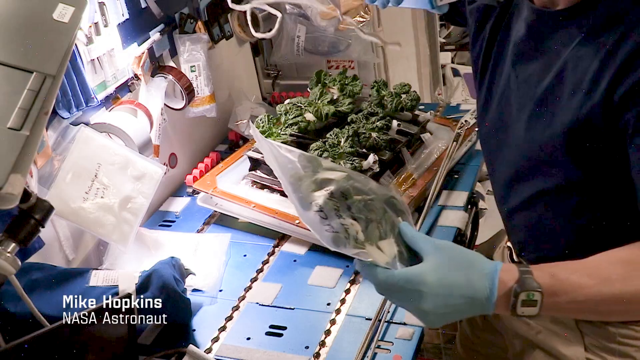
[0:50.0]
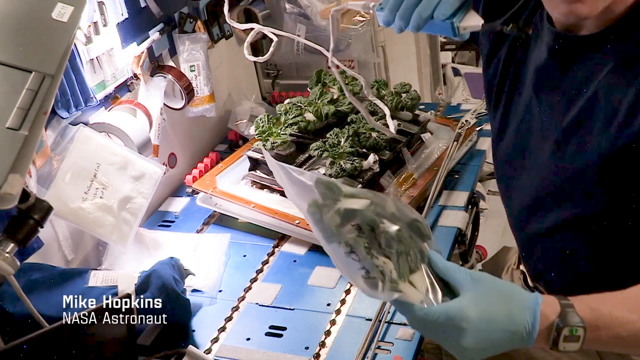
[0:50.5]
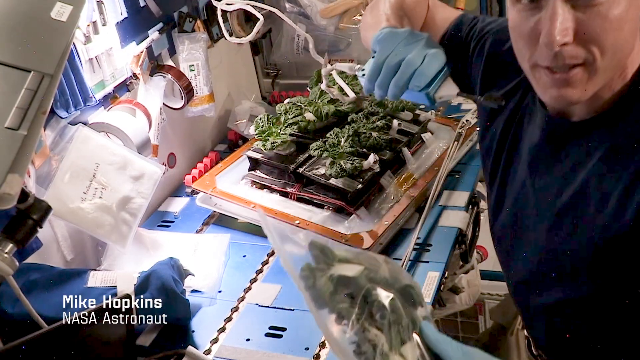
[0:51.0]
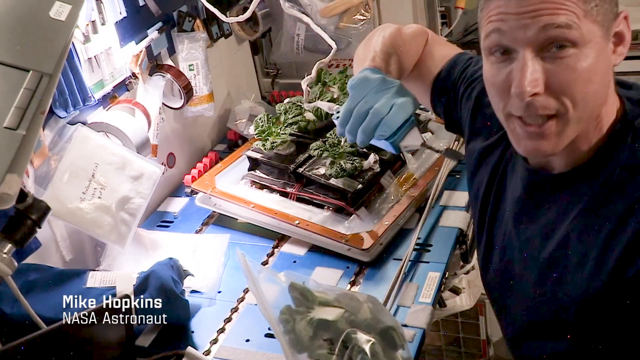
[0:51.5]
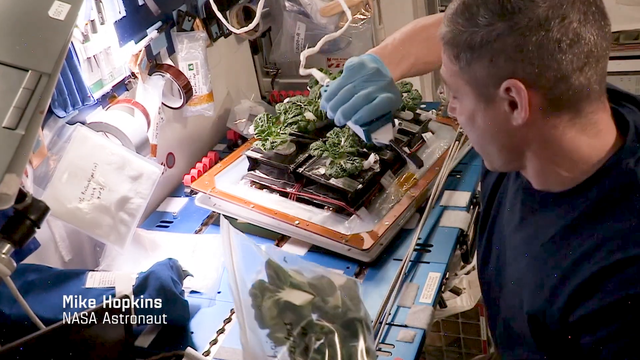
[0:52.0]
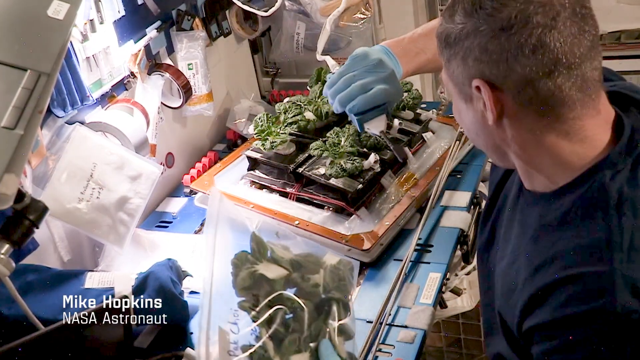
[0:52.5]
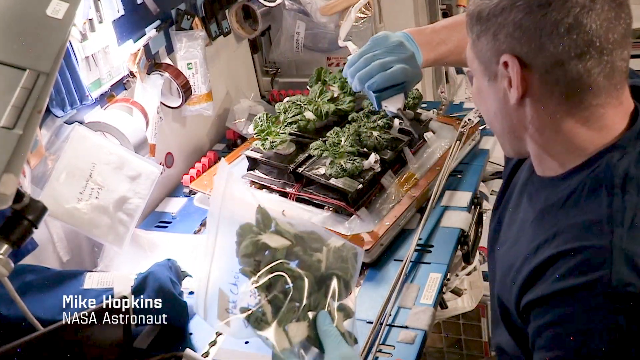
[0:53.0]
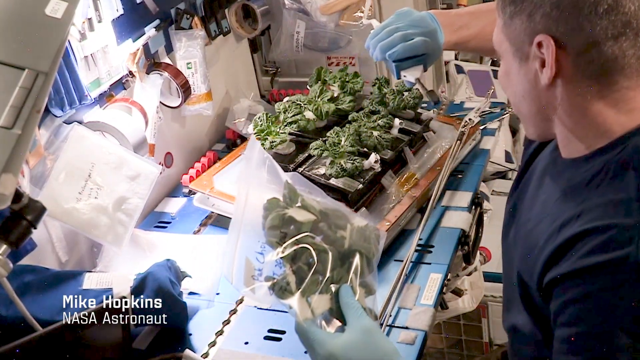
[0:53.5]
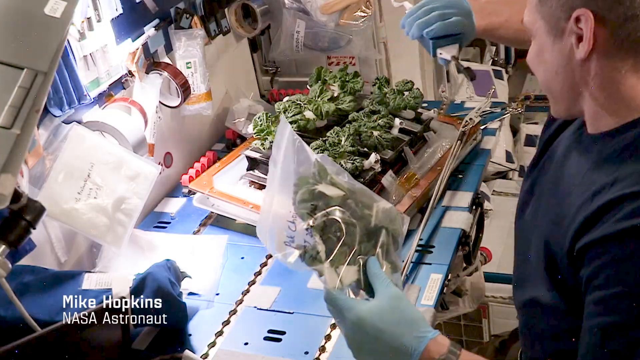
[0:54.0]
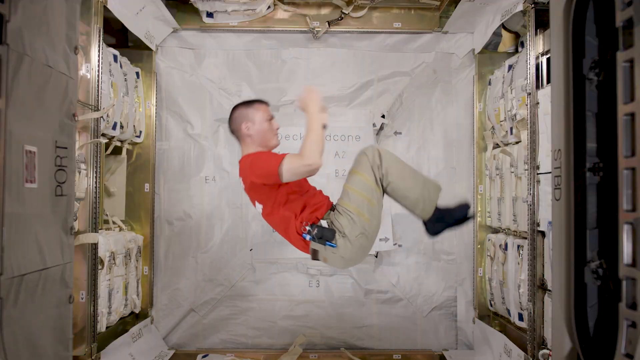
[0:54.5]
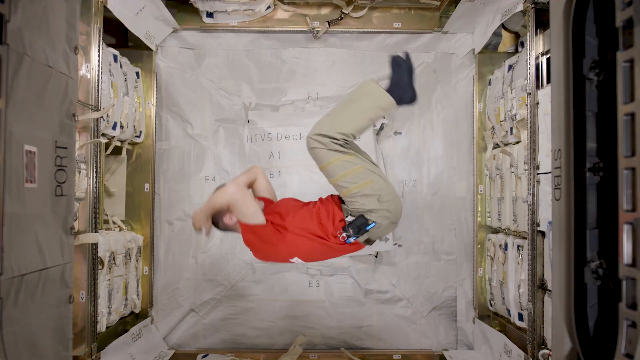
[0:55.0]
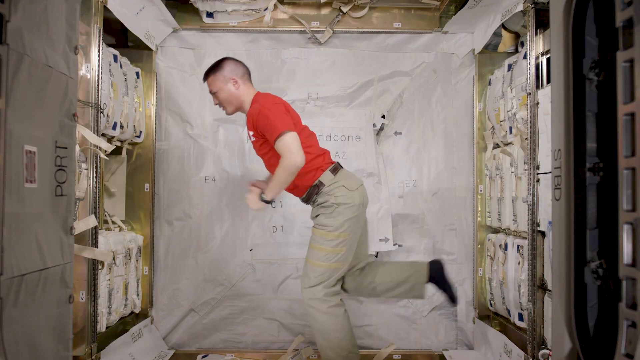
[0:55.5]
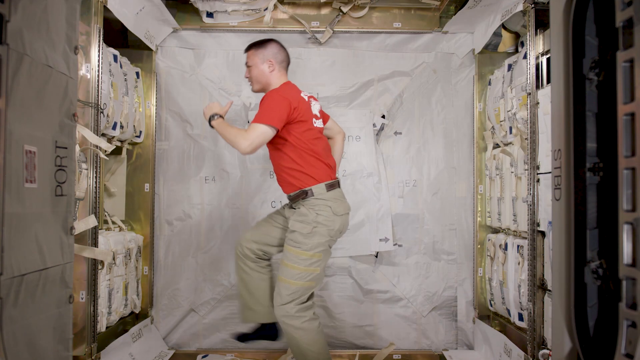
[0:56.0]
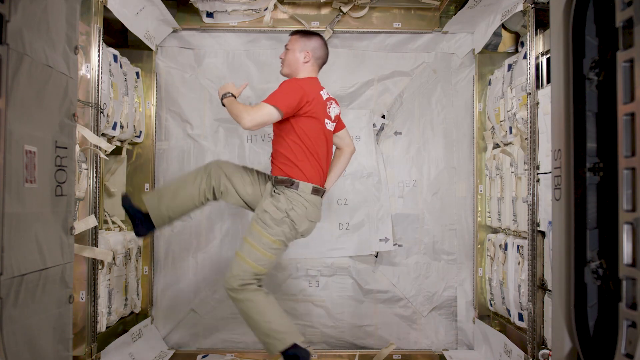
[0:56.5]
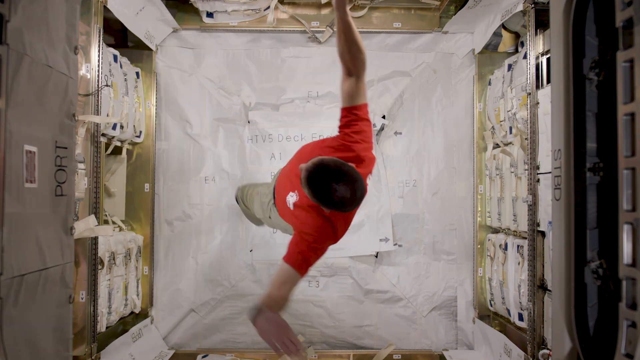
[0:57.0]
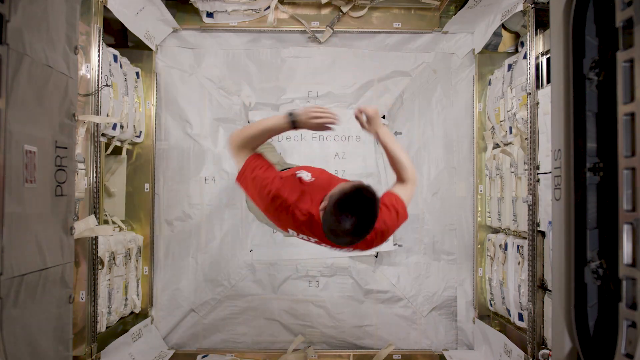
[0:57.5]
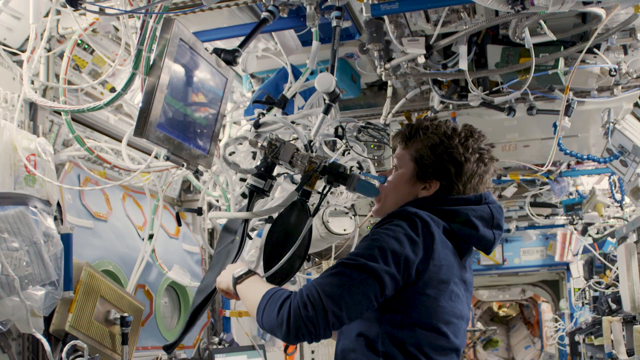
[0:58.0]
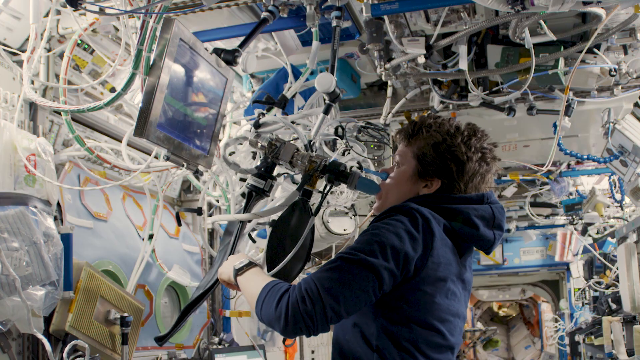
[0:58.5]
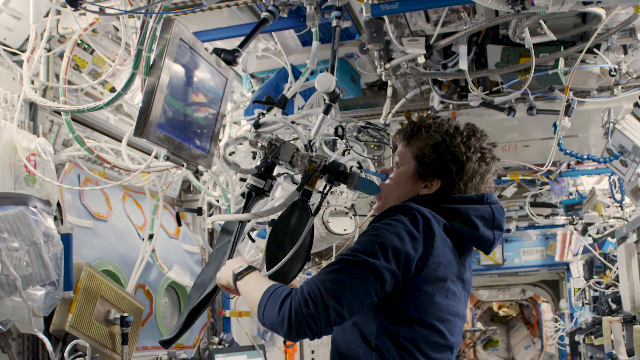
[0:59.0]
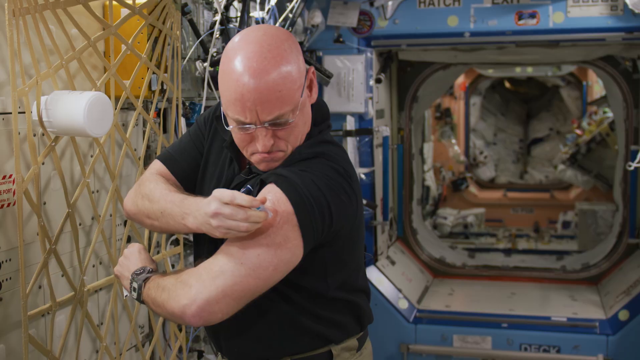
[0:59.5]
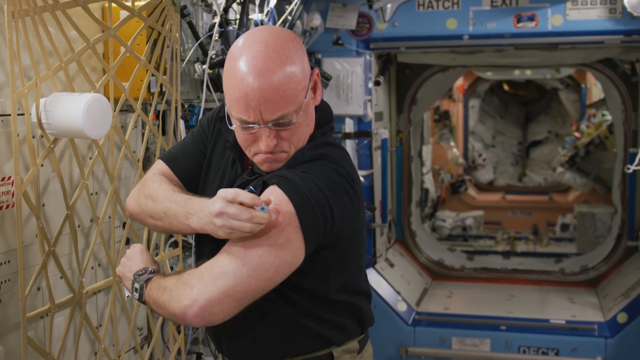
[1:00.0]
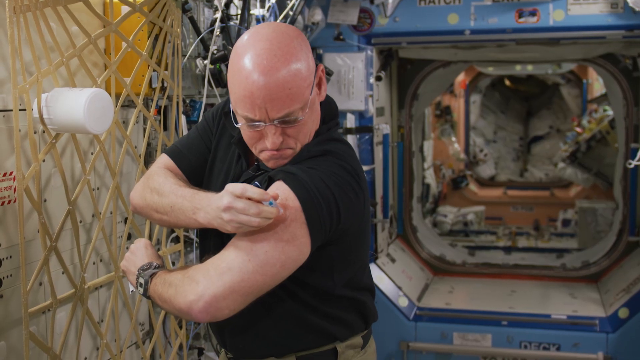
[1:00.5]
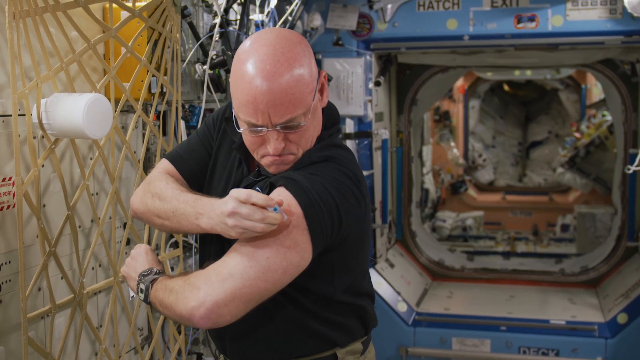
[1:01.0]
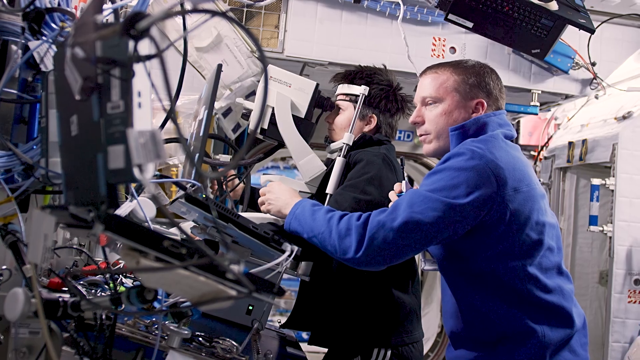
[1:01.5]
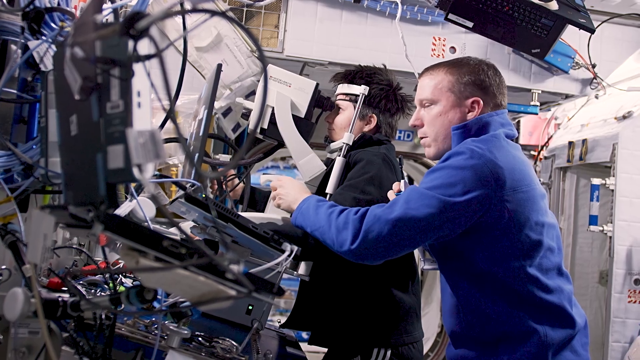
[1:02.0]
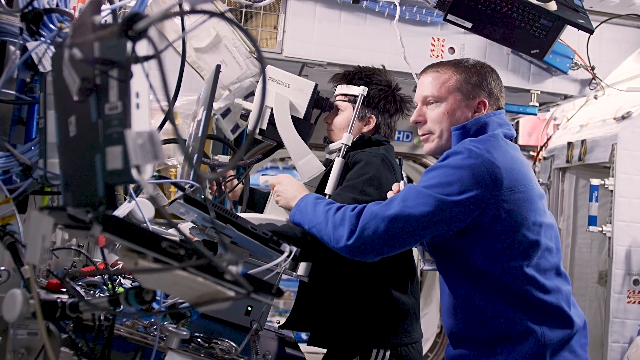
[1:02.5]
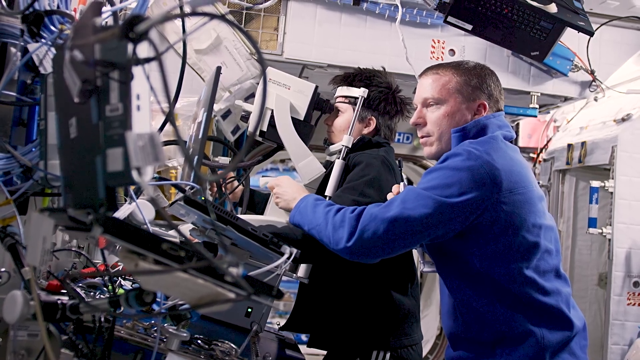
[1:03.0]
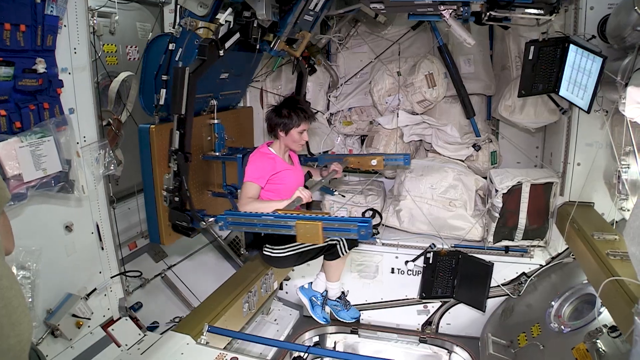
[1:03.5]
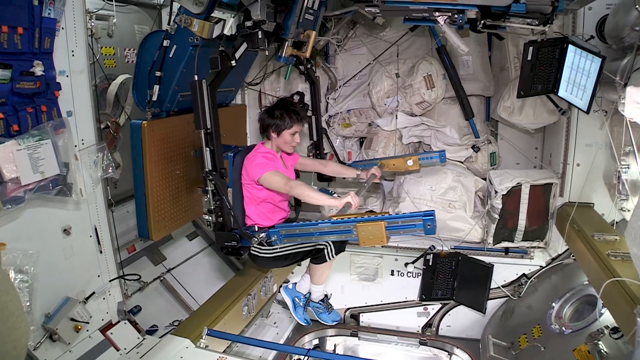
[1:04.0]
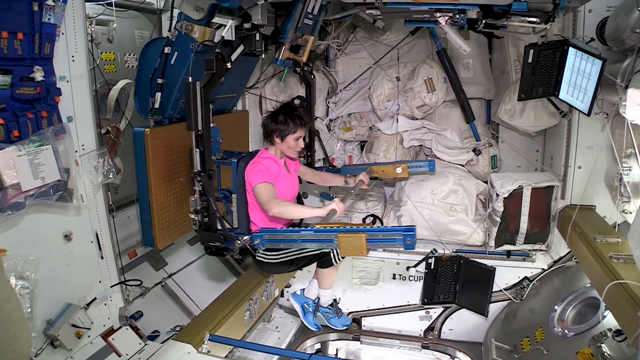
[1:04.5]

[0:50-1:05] Various astronauts on the International Space Station are shown in low-gravity settings. A man in a blue shirt and light blue gloves, identified on screen as Mike Hopkins, works with green plants planted in an interesting-looking device that looks almost electronic but has small black cup planters; he also has some of these plants in a Ziploc-style sealed container. The video shifts to a man in khakis and a red shirt doing flips and spins in zero gravity. A young woman blows into what appears to be a breathing test device, like trying to inflate a balloon. Then a bald-headed man in a black shirt gives himself some type of injection.